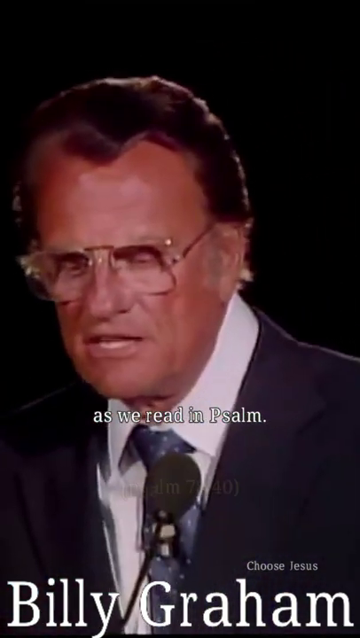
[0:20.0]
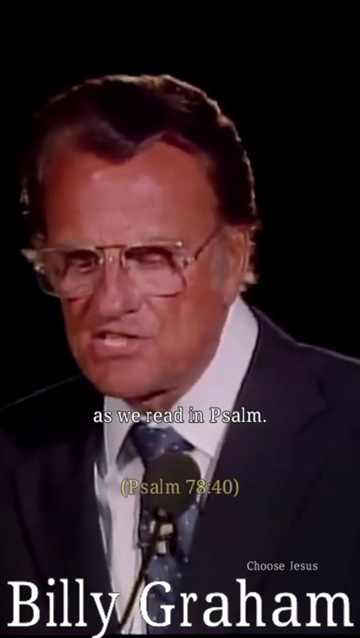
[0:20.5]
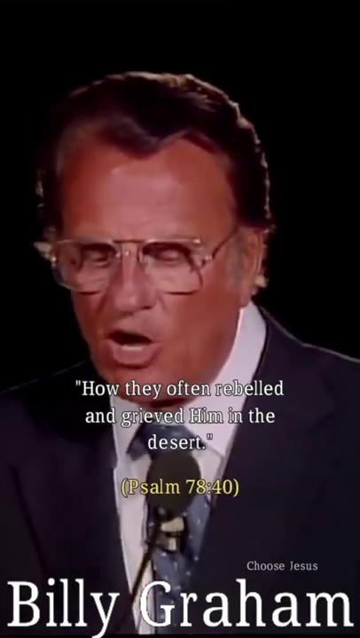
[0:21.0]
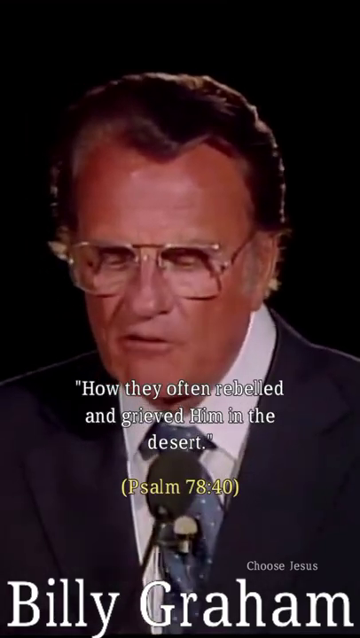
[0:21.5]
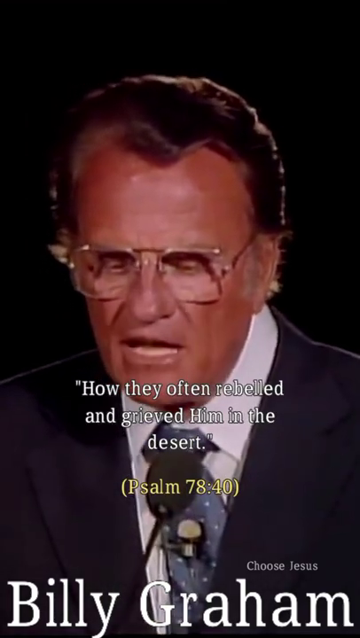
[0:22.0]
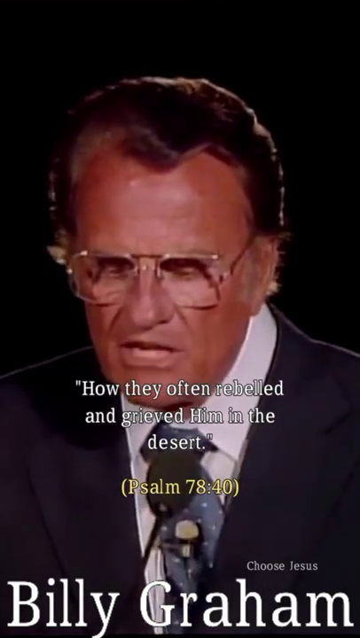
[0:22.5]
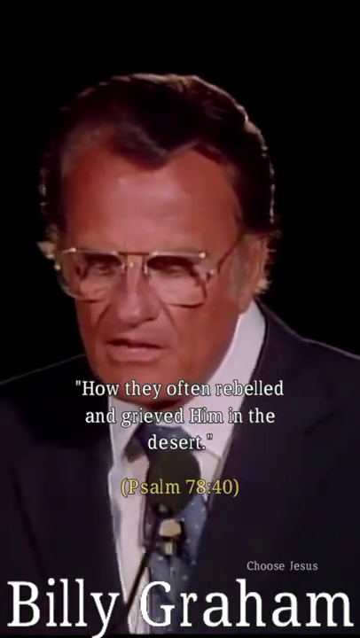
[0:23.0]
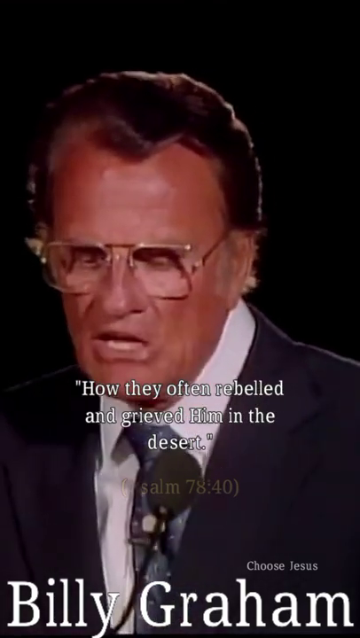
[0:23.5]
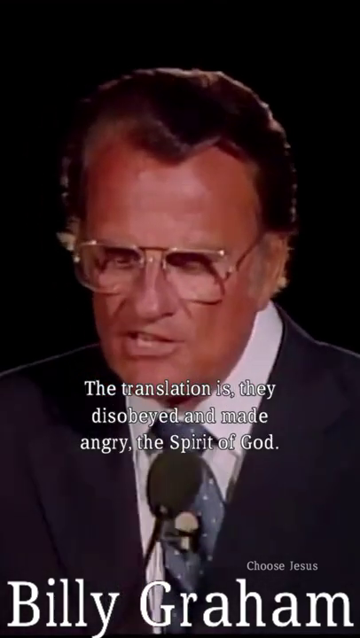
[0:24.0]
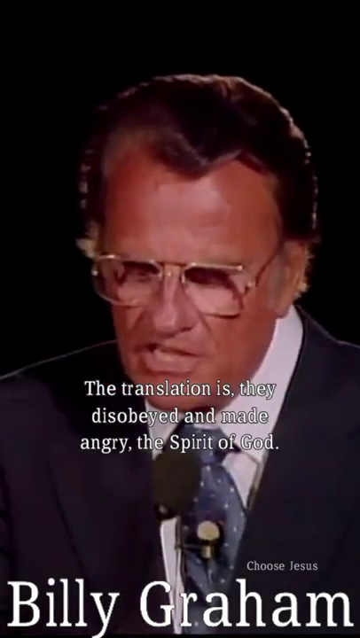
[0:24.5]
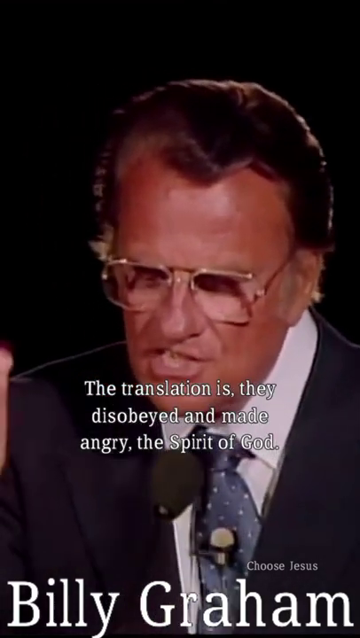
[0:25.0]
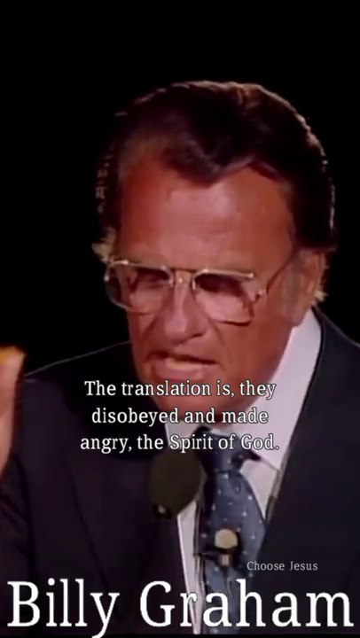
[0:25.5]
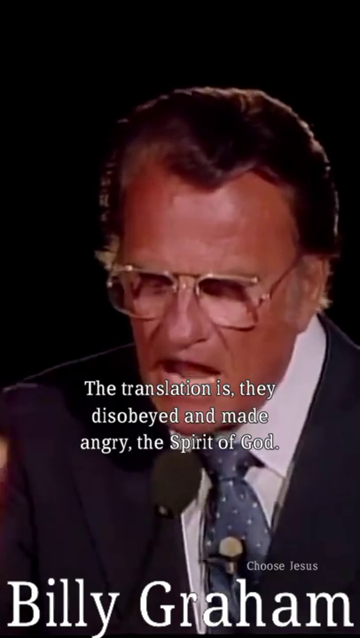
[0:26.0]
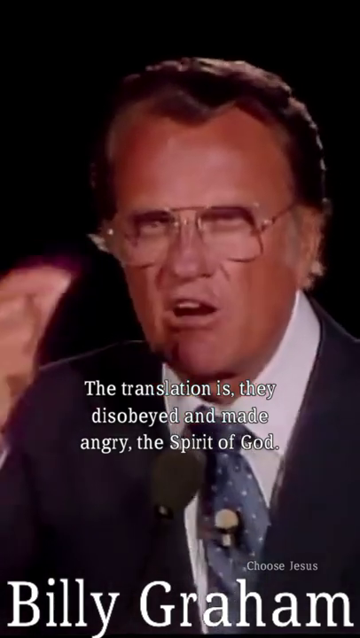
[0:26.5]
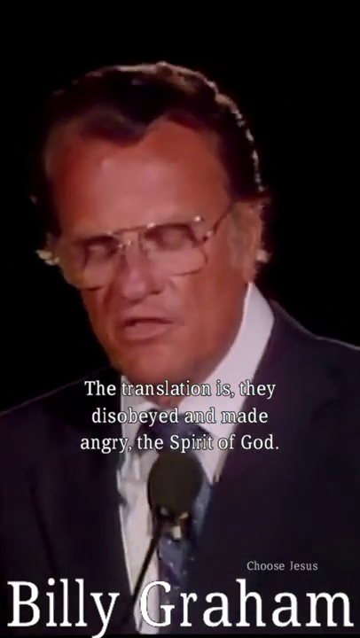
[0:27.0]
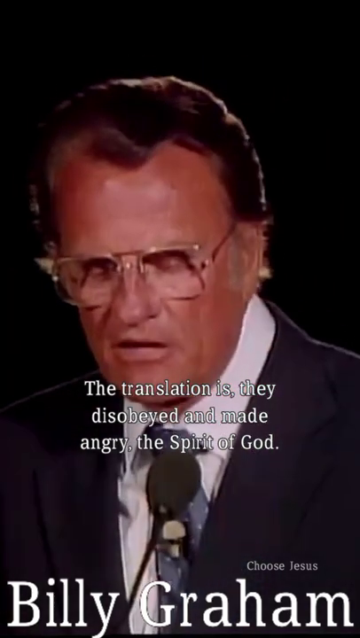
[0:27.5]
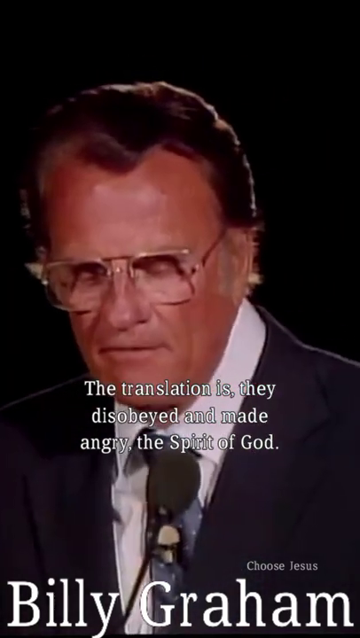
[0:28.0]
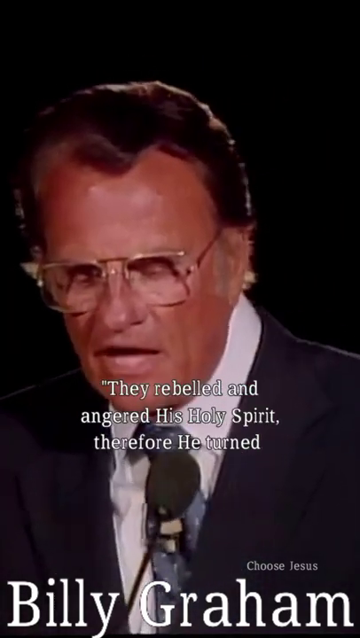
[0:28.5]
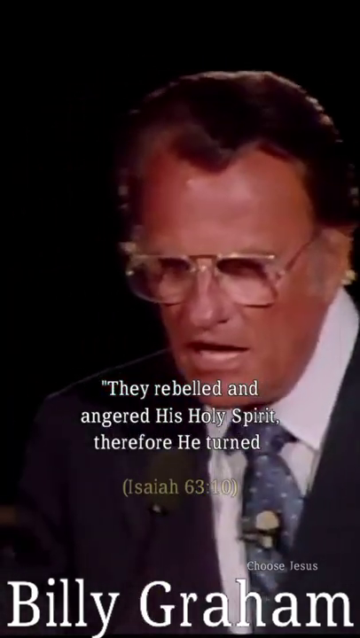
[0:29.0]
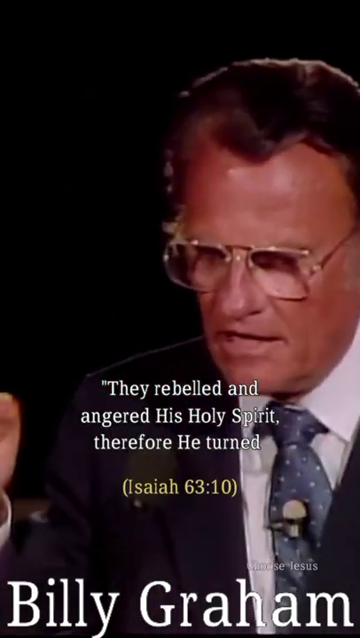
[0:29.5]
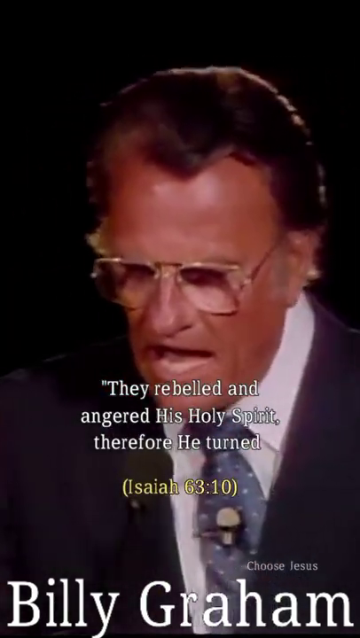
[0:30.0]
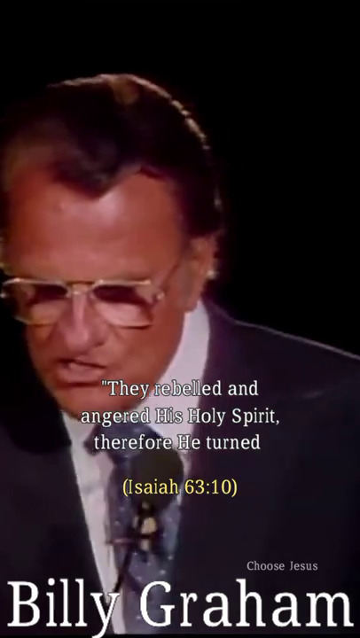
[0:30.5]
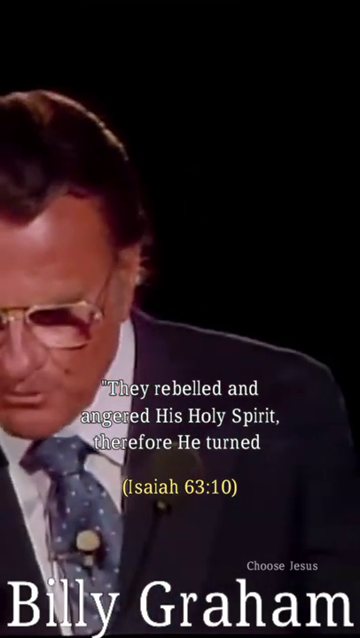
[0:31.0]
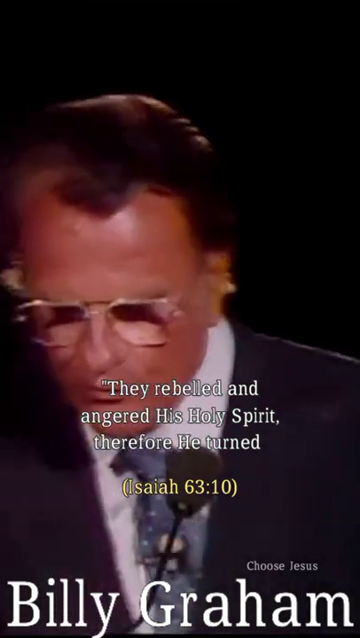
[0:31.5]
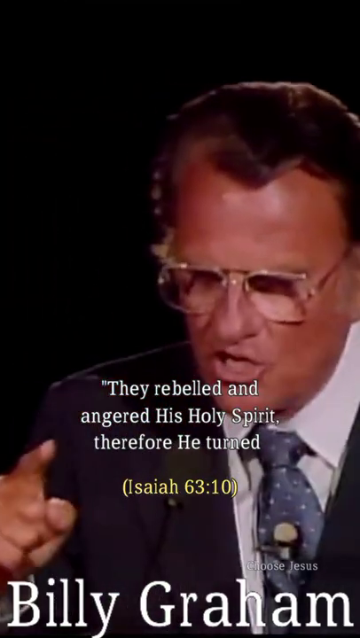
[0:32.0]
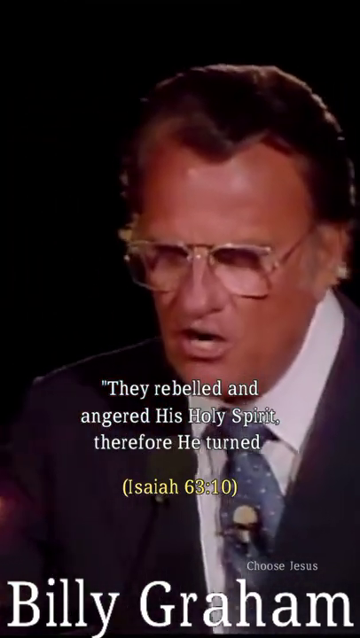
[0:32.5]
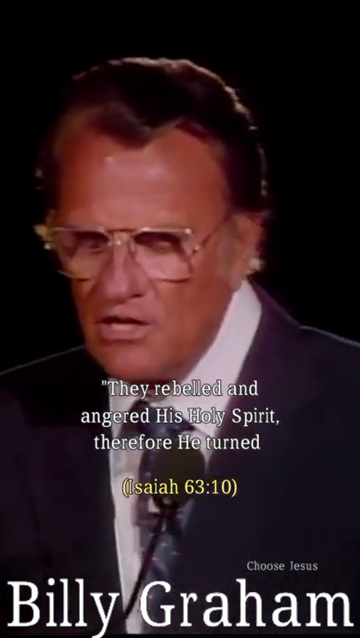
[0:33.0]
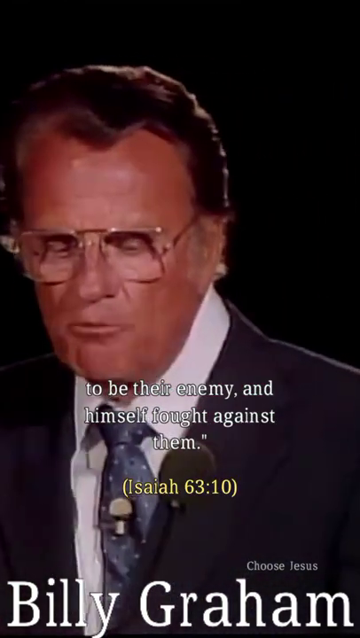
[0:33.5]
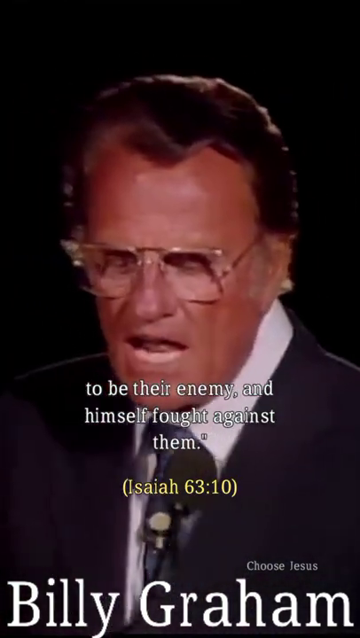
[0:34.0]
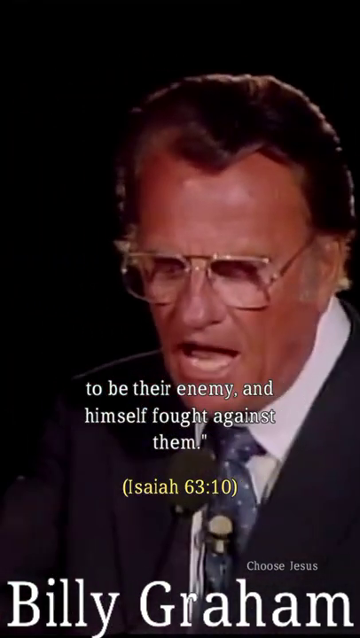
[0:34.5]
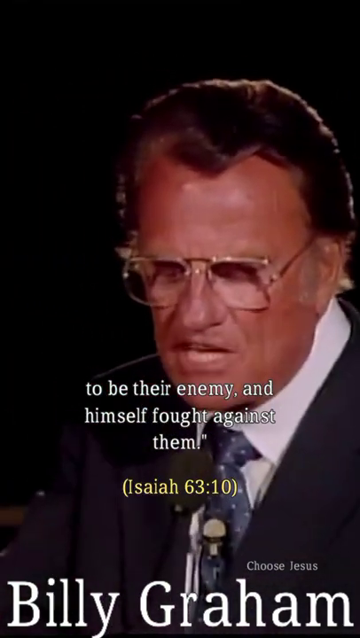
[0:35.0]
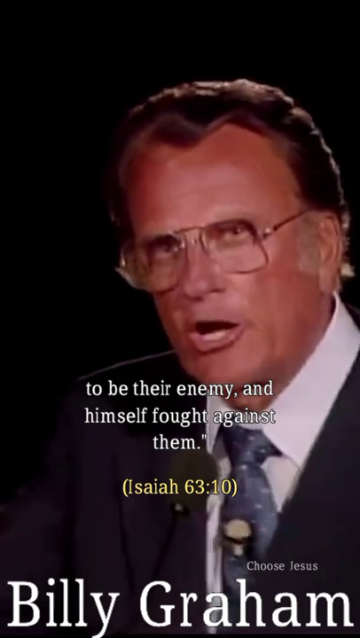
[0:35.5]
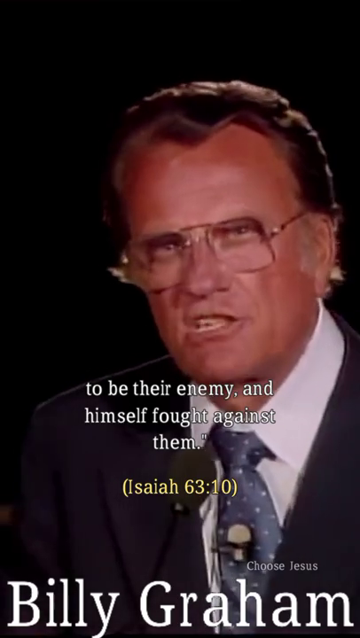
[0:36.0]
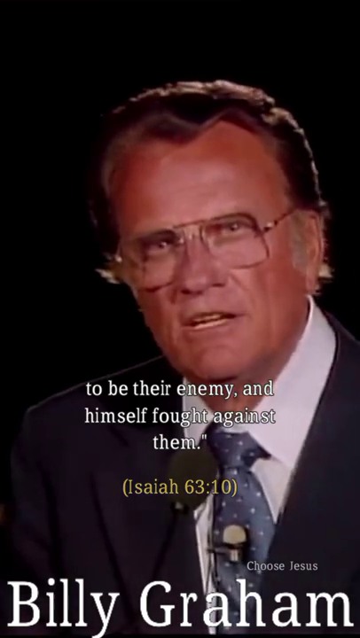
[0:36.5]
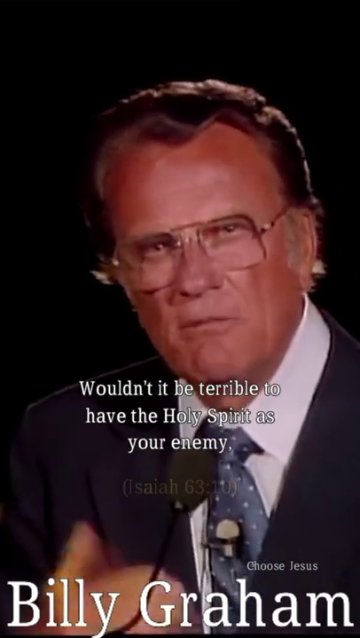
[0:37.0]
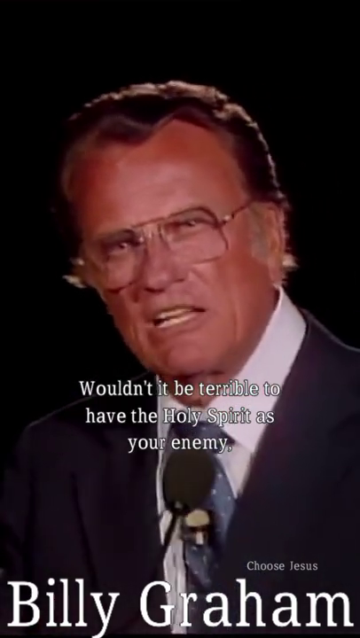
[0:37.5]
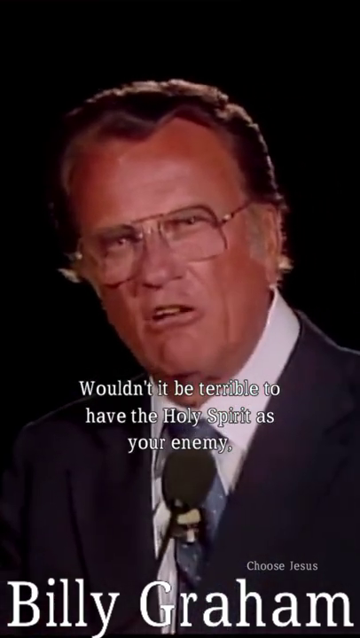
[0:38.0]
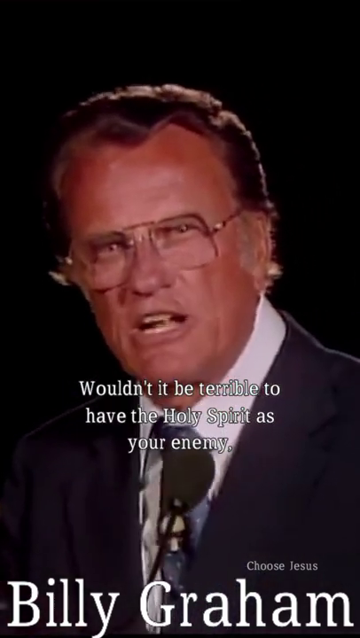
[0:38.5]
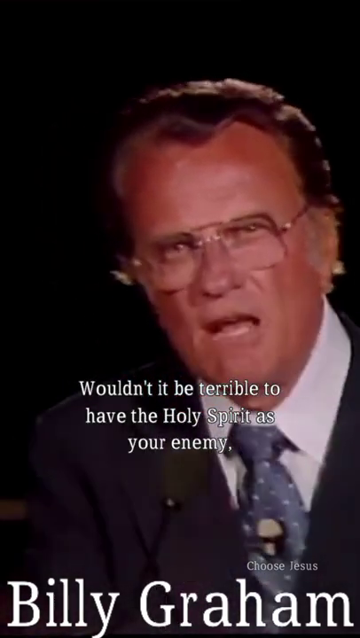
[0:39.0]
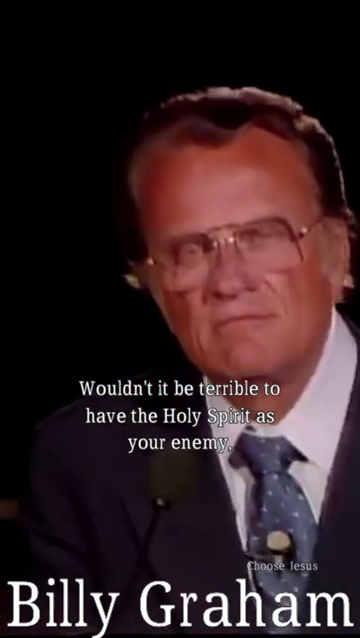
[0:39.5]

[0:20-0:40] A quote appears in white text in the center of the frame: "How they often rebelled and grieved him in the desert," along with "(psalm 78:40)" in yellow text. The words stay on screen, and then the text reads "they disobeyed and made angry the spirit of god" as the translation. Billy Graham looks down, reading from his notes, and uses his hands as he speaks to further make his point. He wears thin-rimmed glasses, a white shirt and a blue tie with polka dots, and a small microphone is clipped to his tie.